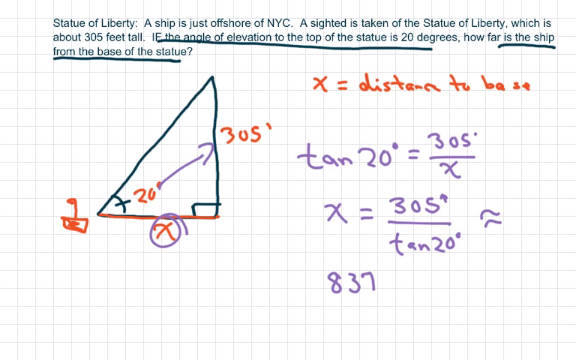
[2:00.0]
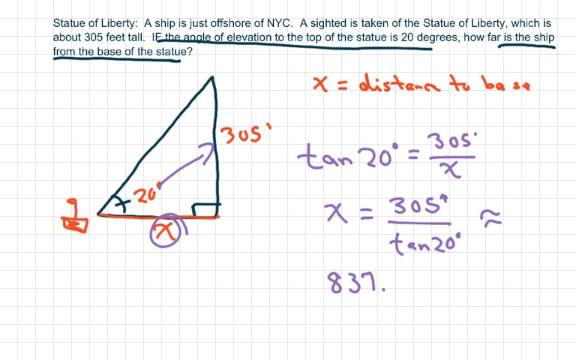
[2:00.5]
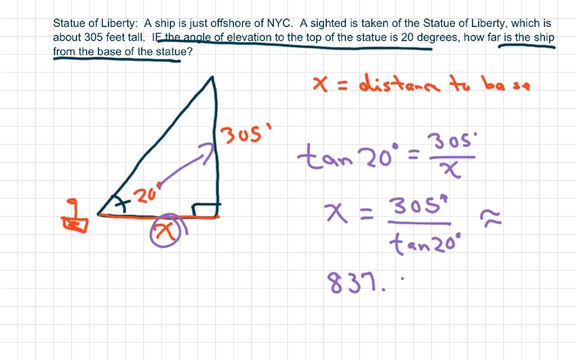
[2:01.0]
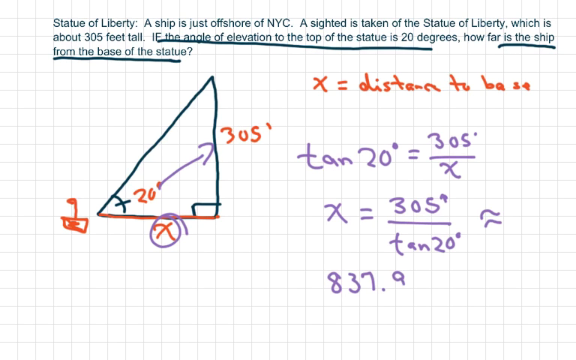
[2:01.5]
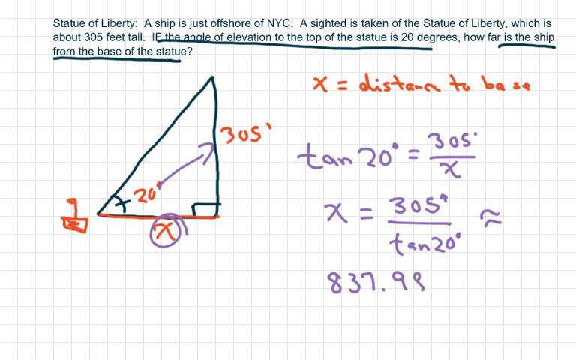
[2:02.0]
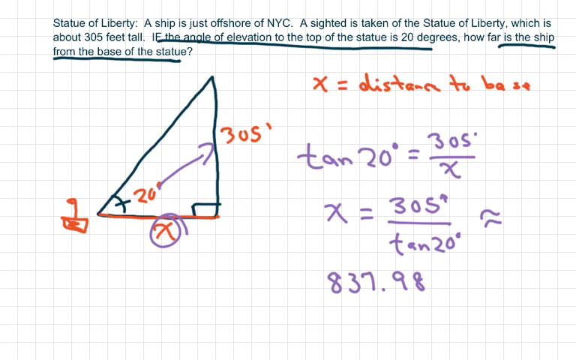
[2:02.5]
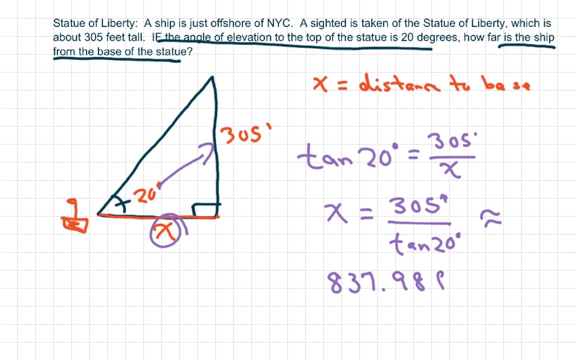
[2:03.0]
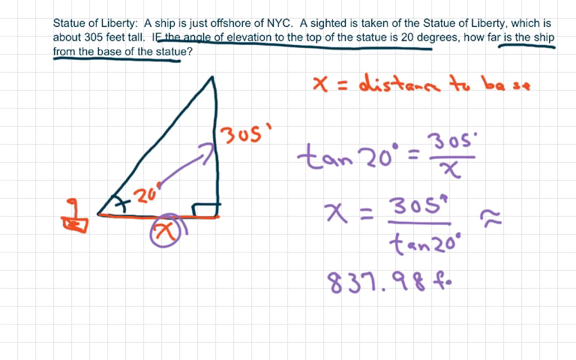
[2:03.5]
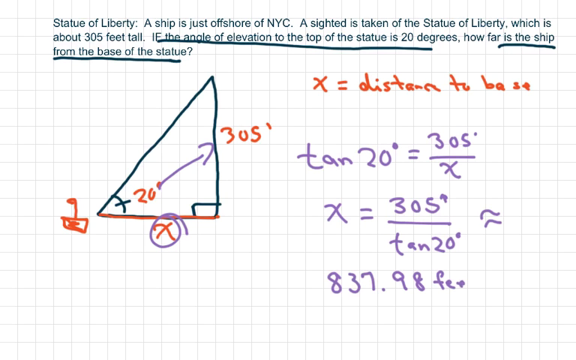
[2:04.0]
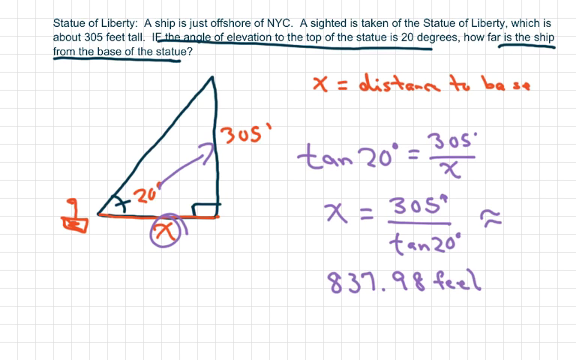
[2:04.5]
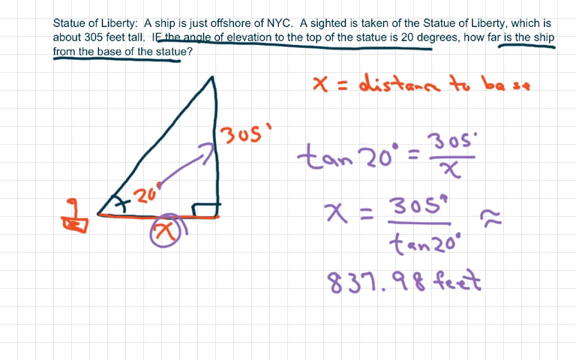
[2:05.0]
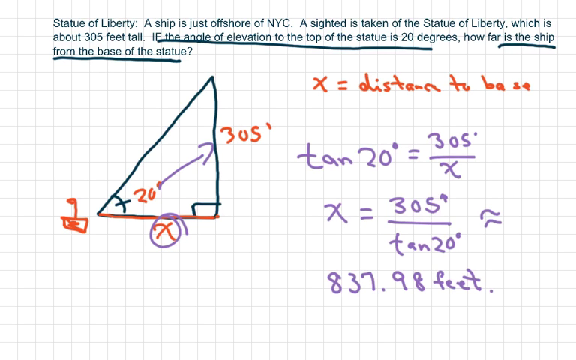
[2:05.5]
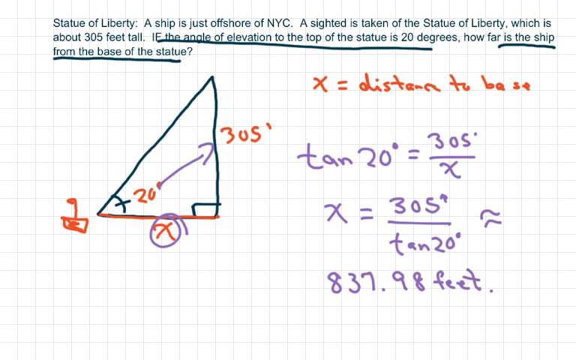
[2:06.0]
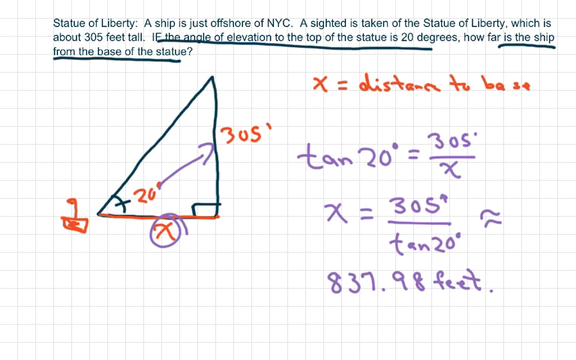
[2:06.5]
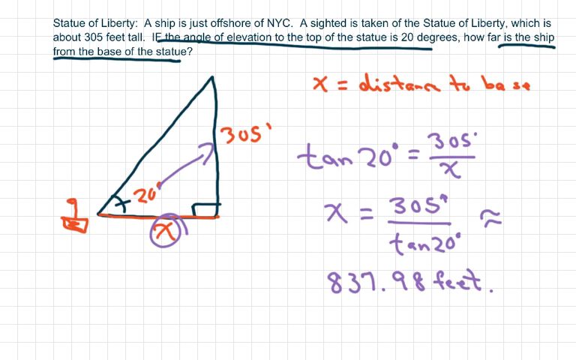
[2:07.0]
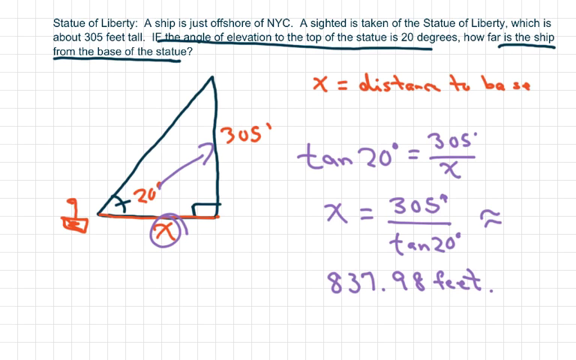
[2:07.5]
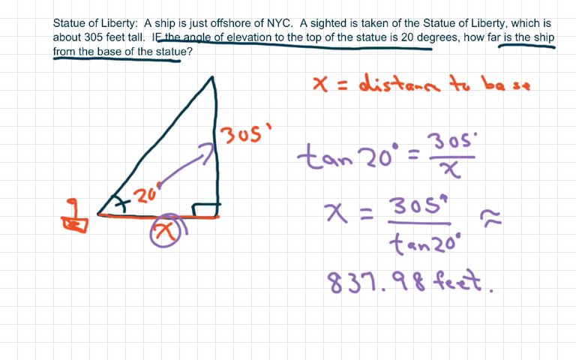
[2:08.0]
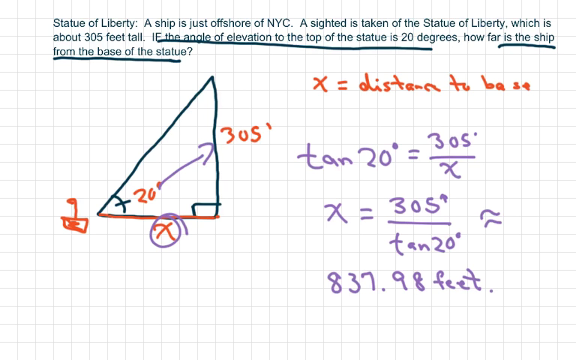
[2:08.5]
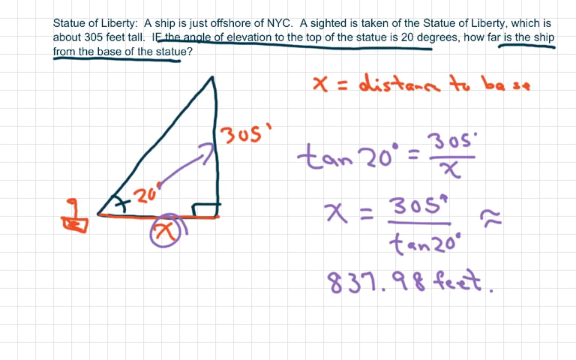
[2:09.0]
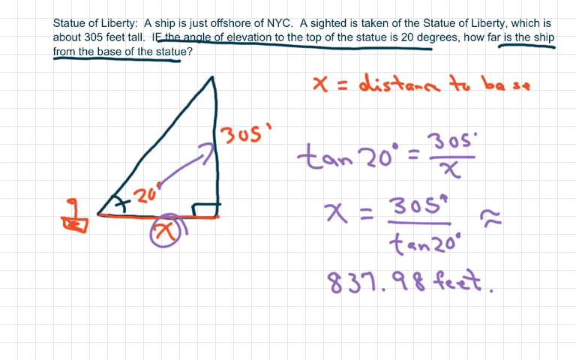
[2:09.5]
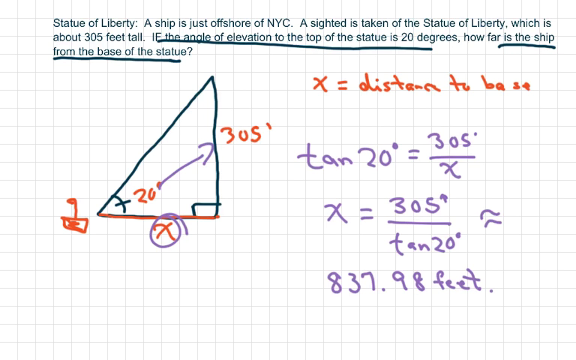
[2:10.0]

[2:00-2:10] The background looks like white graphing paper with a math word problem about the Statue of Liberty at the top. Underneath on the left side is a triangle with a 90 degree angle at the bottom right, a 20 degree angle at the bottom left, and a measurement of 305 feet on the right side, representing the height of the Statue of Liberty. On the right side of the screen, red text reads "x equals distance to base." Underneath, in light purple text, it reads "tan 20 degrees equals 305'," with squiggly line equal signs next to it. Below that is "x equals 305' divided by tan 20 degrees," also with squiggly line equal signs next to it. Numbers are then written underneath in light purple marker, reading "837.98 feet."